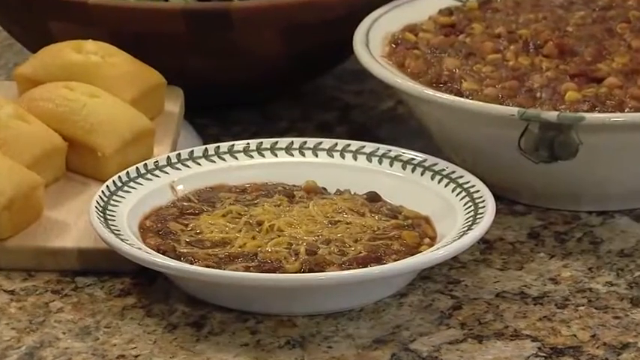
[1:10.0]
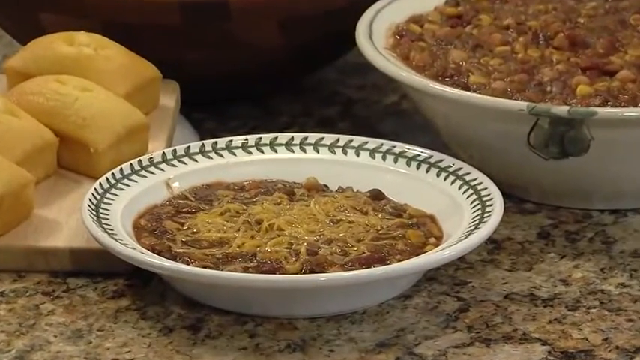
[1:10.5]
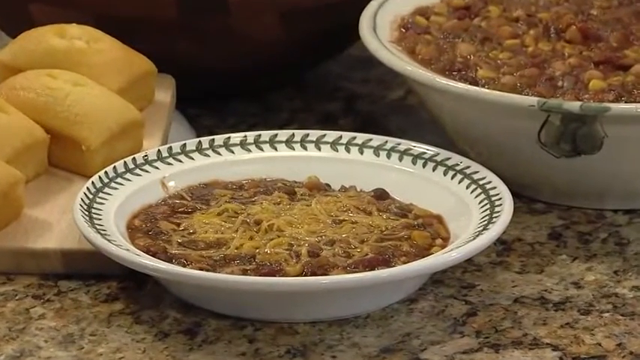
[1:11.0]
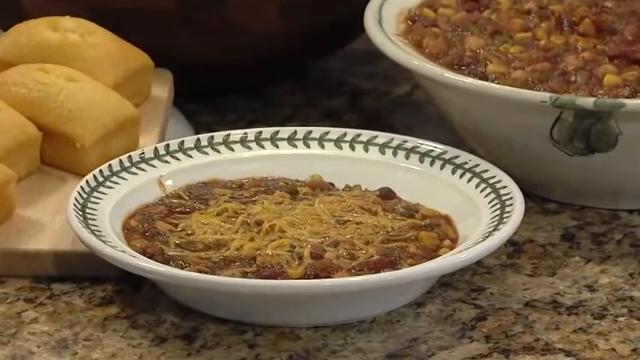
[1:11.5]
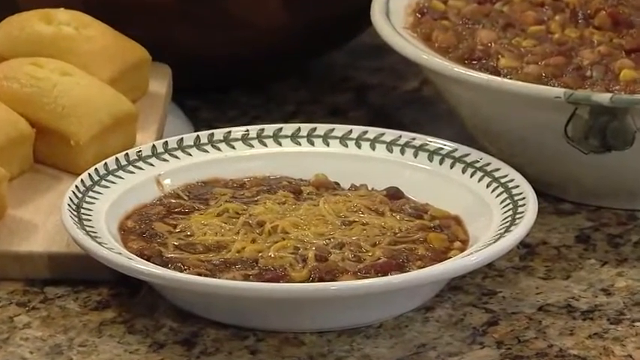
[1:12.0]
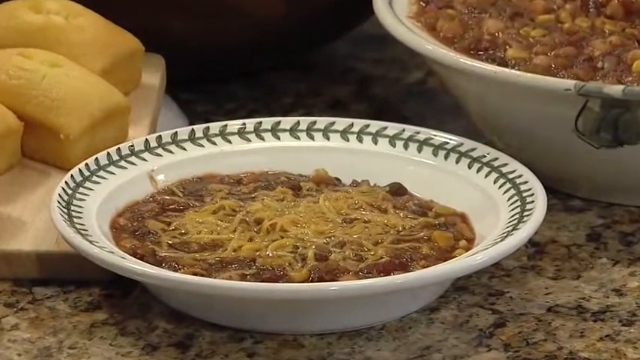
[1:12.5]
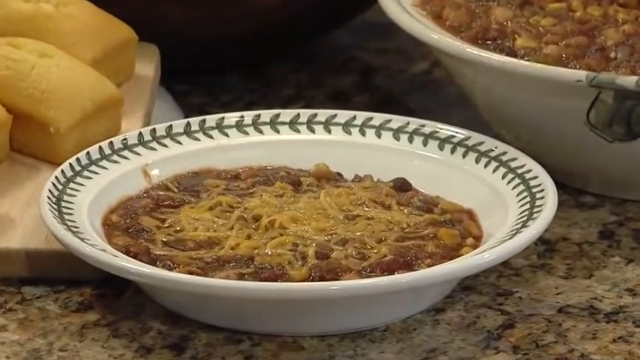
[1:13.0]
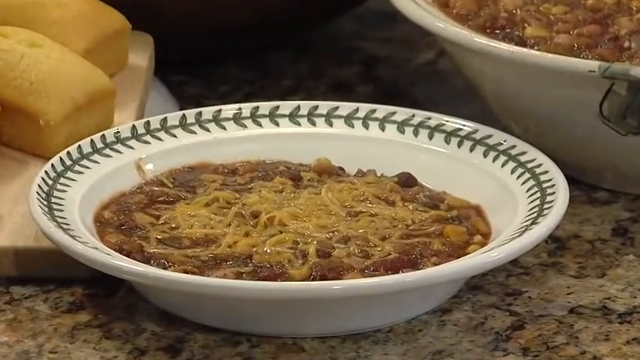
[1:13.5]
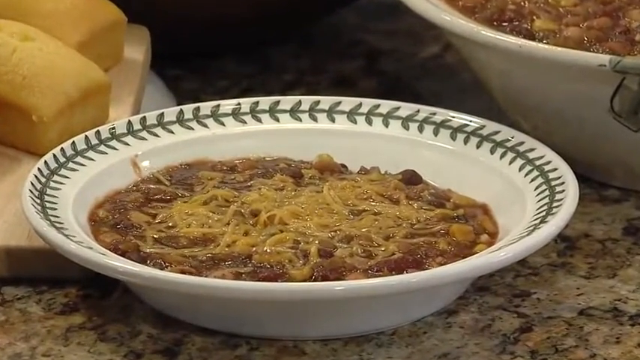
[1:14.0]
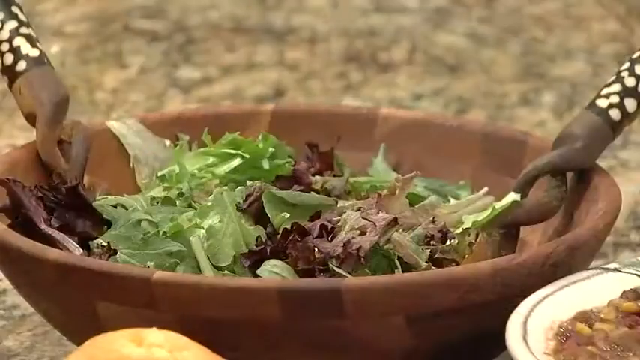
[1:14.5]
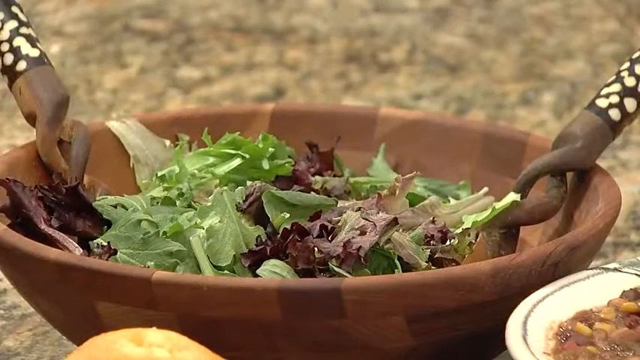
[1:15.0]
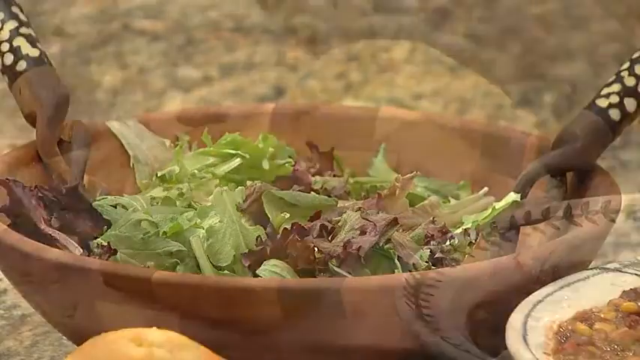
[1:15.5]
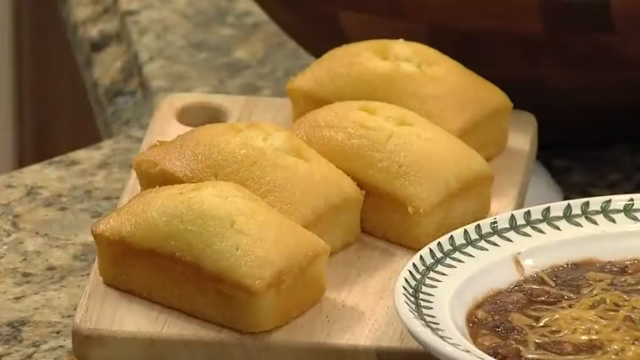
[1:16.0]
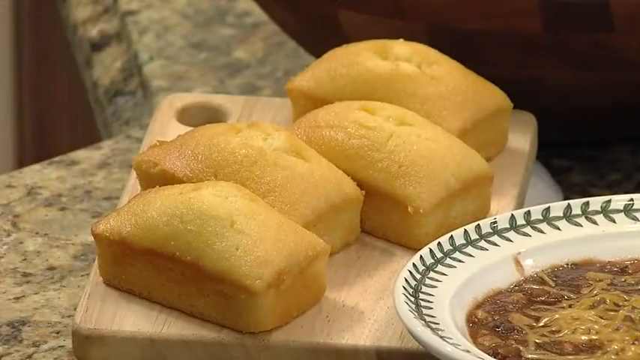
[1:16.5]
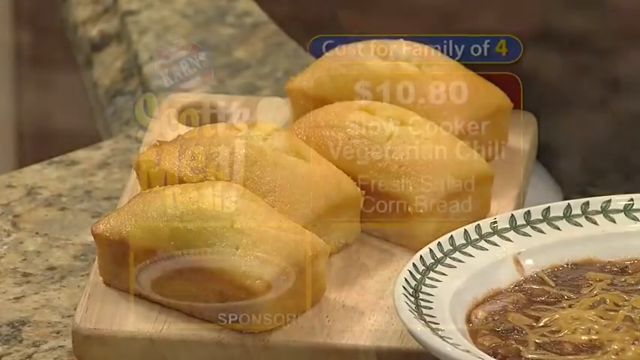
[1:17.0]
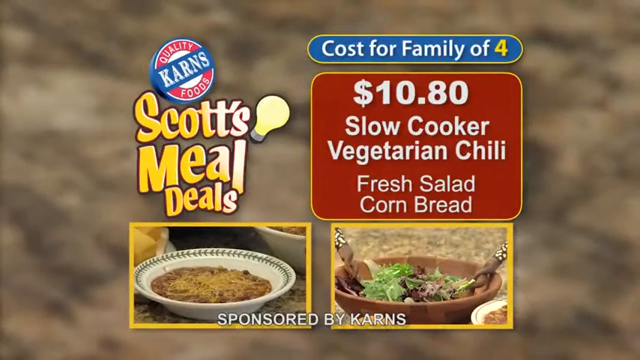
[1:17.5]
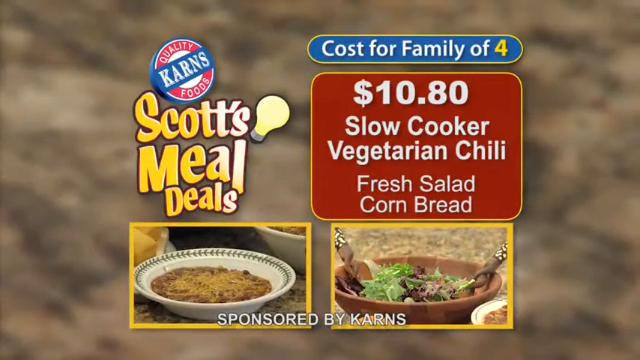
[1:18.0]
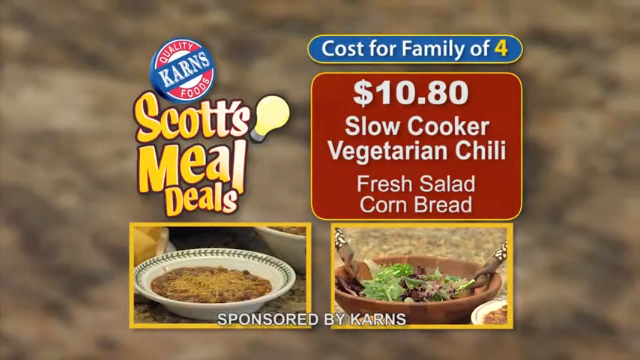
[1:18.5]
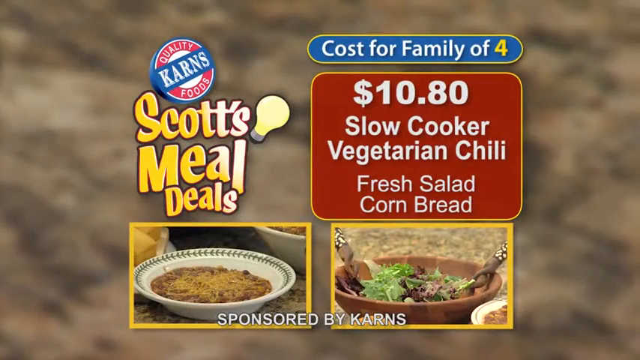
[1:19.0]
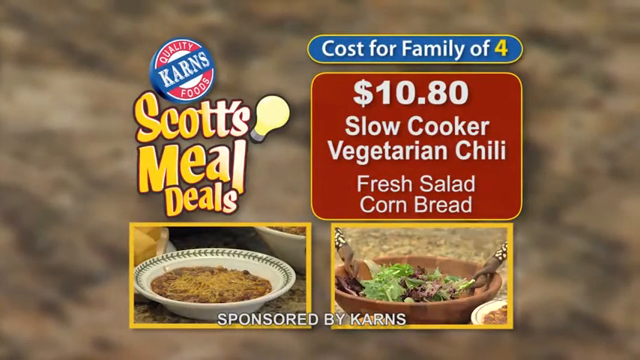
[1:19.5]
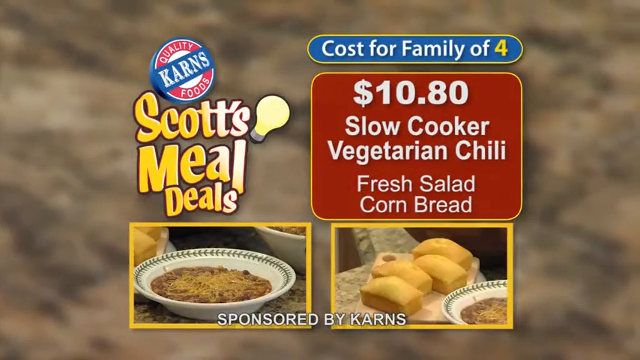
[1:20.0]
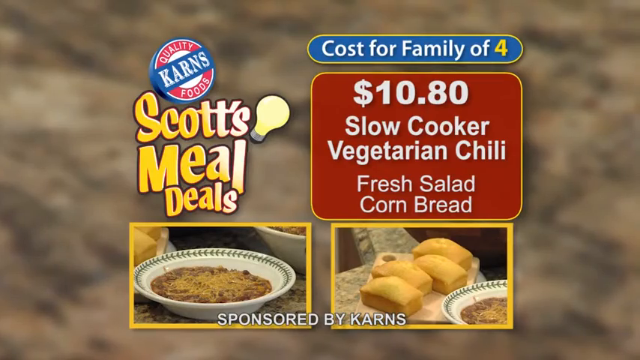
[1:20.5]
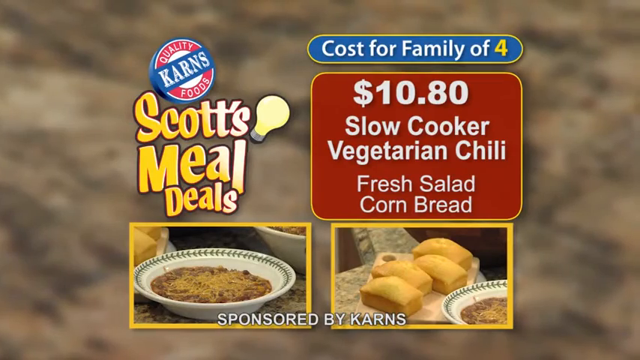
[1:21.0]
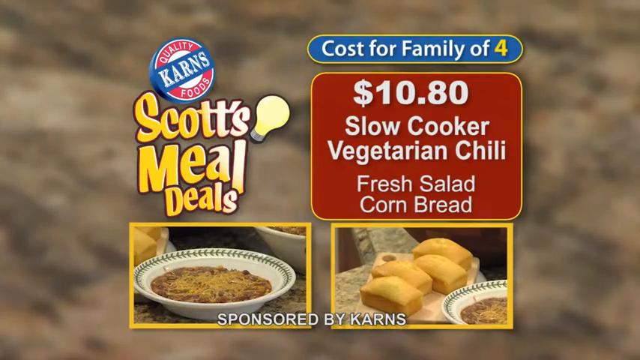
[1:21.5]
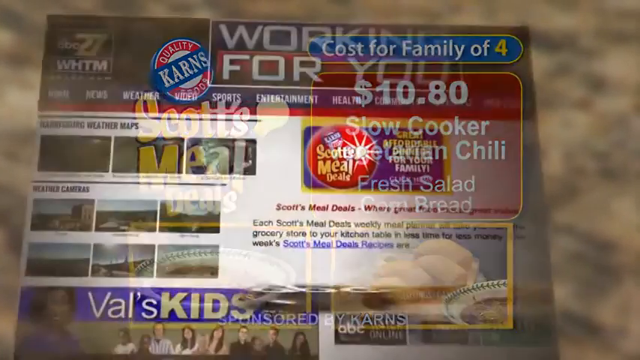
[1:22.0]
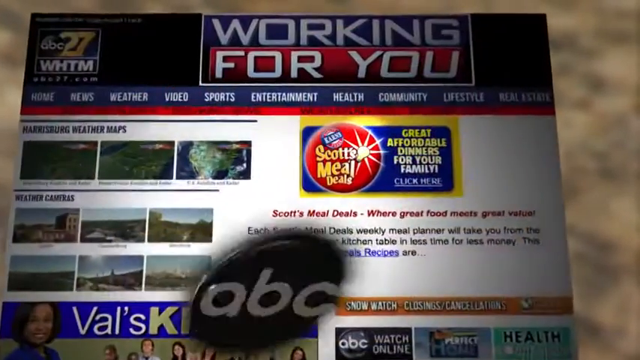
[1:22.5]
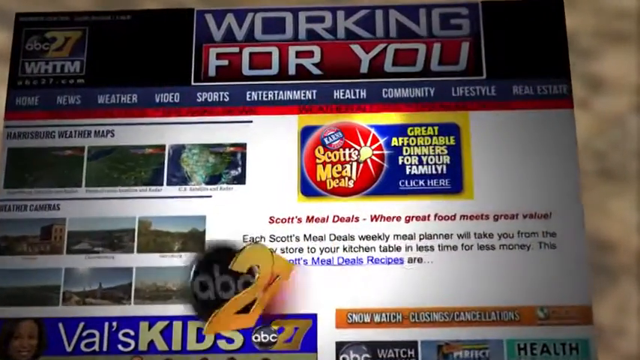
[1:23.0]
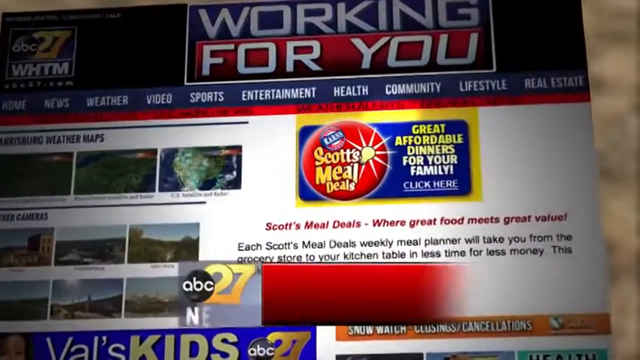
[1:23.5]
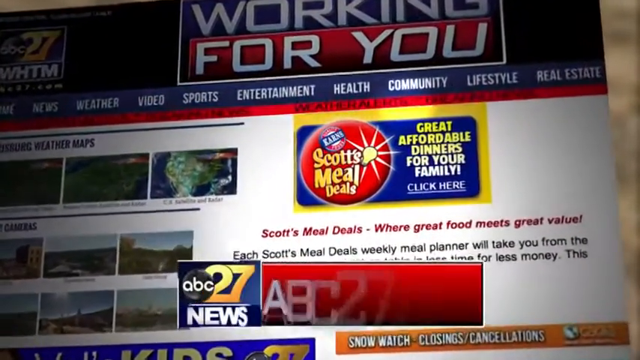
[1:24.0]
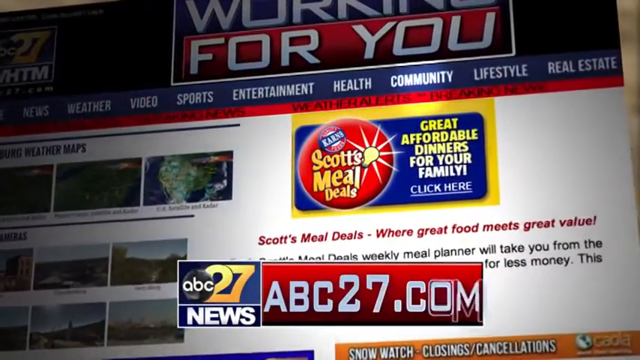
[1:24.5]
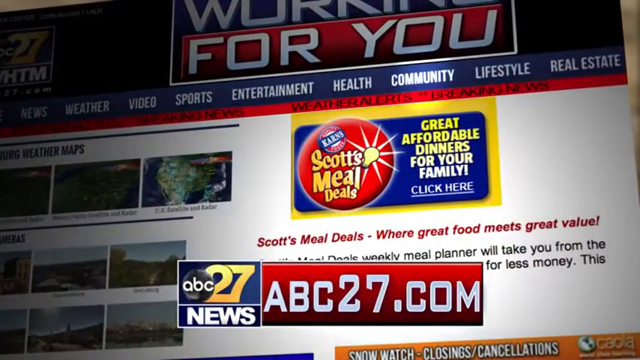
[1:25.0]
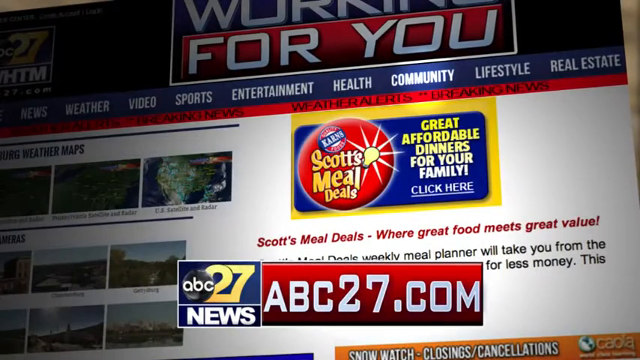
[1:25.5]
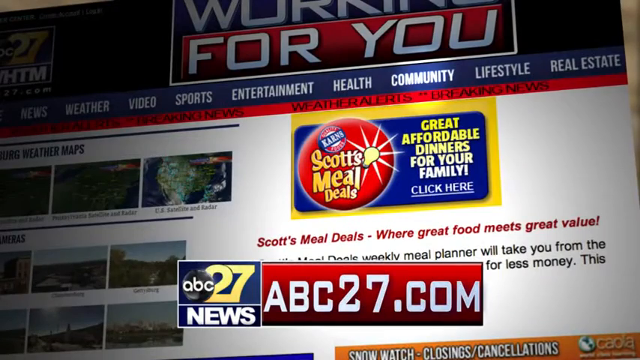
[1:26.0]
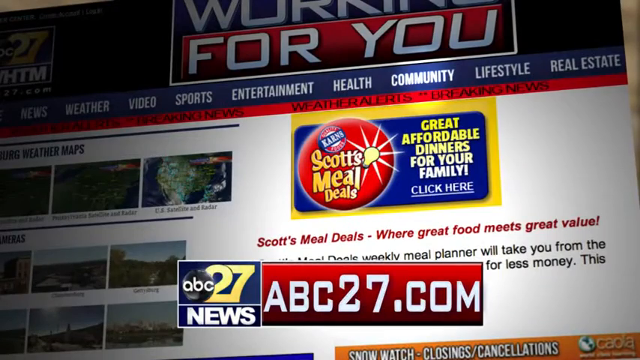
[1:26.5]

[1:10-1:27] The angle changes to show only the single-serving bowl of chili with shredded cheese on top, with pieces of cornbread in the background laid on a wooden board and the bottom left corner of the big family-style serving of chili visible. The camera continues to zoom into the single bowl. The camera then changes to images of the side dishes: first the salad in the wooden bowl, then the cornbread on the wooden board. Next comes a screen with information about Scott's Meal Deals, sponsored by Karns. A red box lists "slow cooker vegetarian chili, fresh salad, and cornbread" along with the price, "$10.80". Above it, a smaller blue box says "cost of family of four". All the text in both boxes is white except the word "four", which is yellow. At the bottom are two images, one of the chili and one of the salad; the salad image later cuts to an image of the cornbread. The bottom also carries the text "sponsored by Karns". Lastly, the screen changes to a news page, abc27news.com.